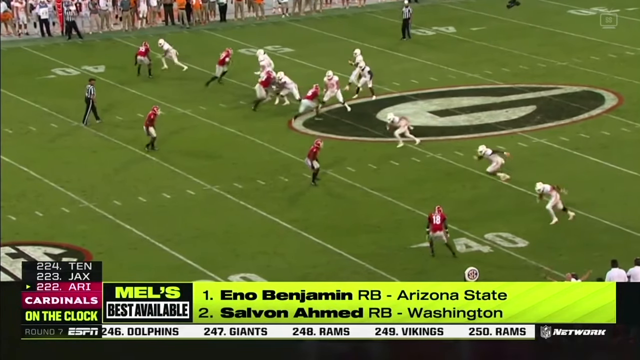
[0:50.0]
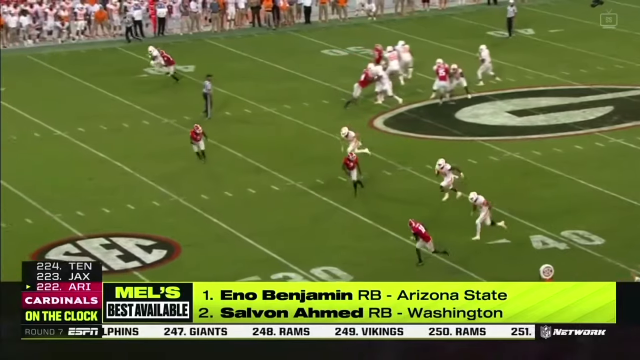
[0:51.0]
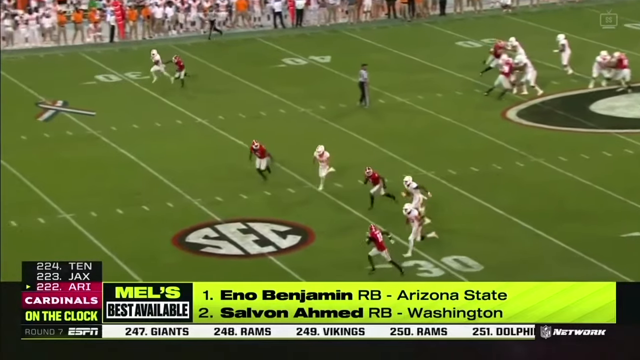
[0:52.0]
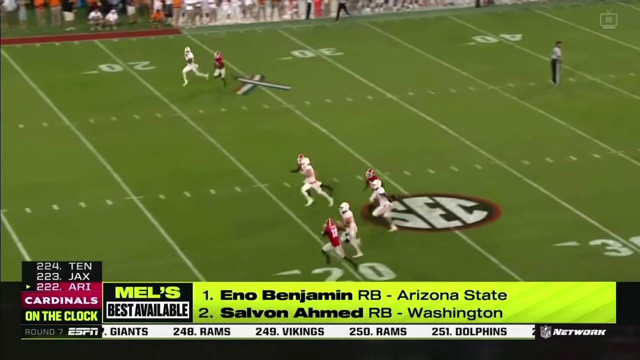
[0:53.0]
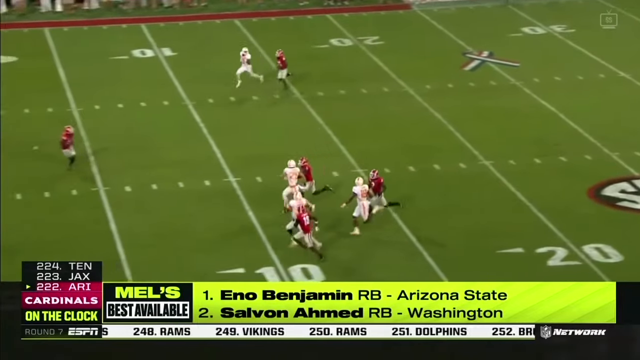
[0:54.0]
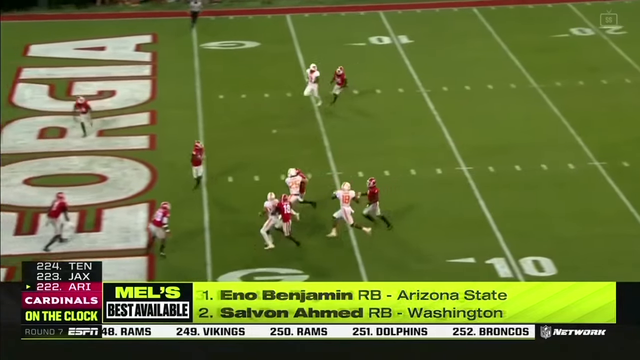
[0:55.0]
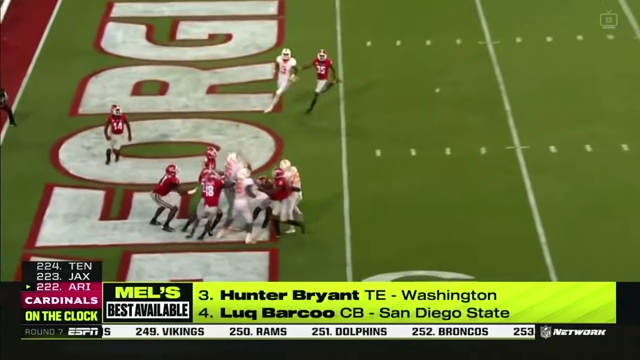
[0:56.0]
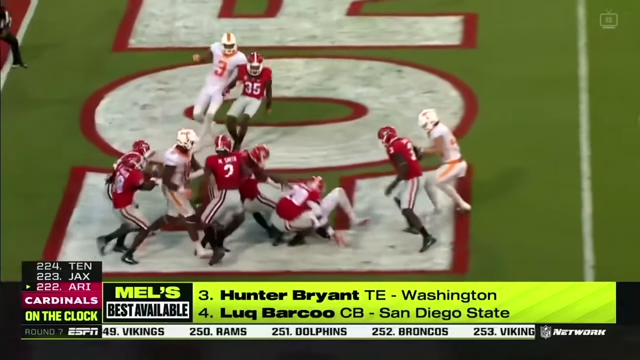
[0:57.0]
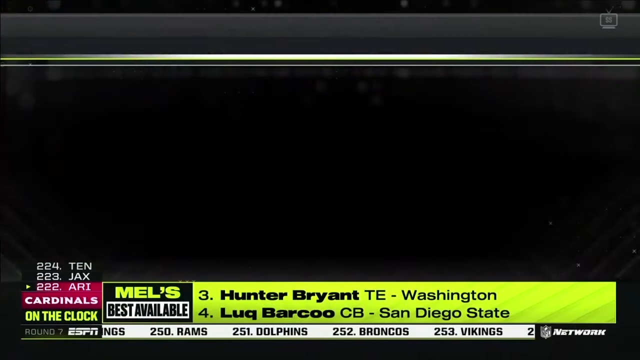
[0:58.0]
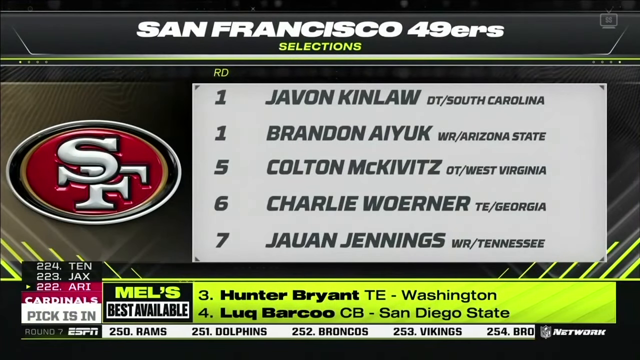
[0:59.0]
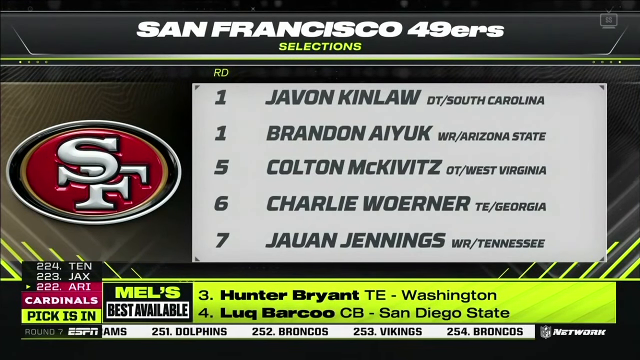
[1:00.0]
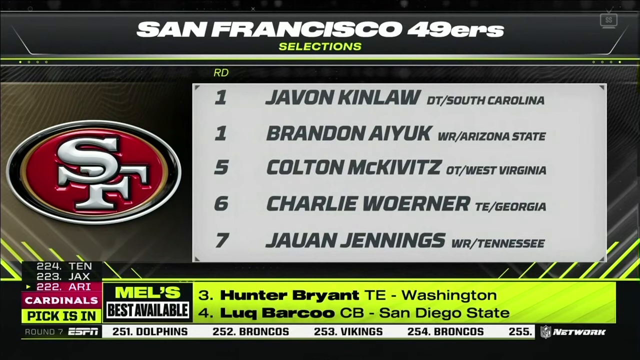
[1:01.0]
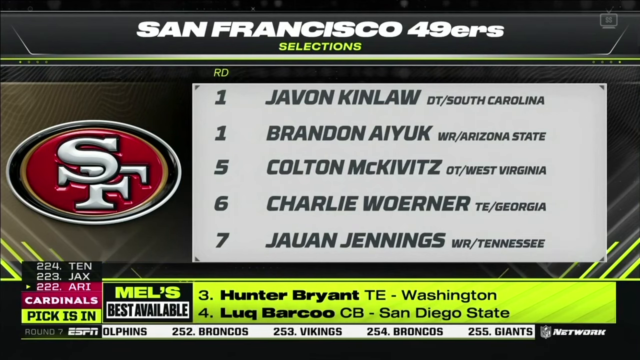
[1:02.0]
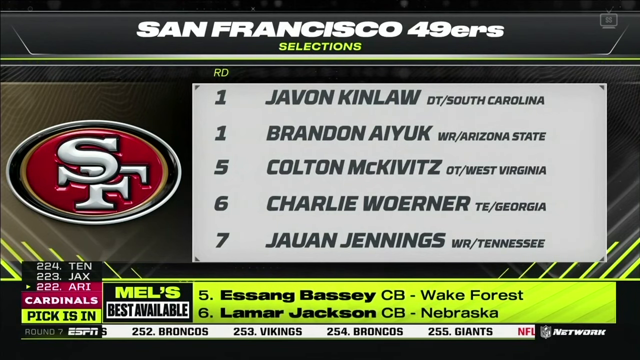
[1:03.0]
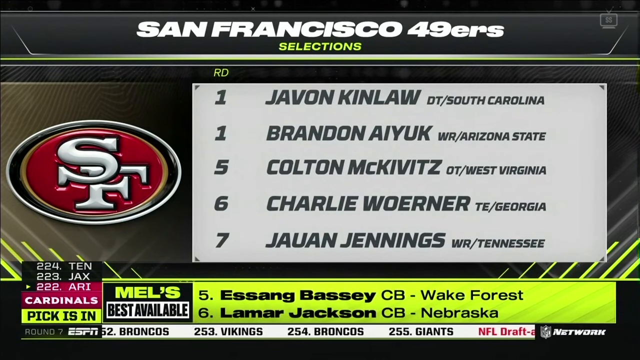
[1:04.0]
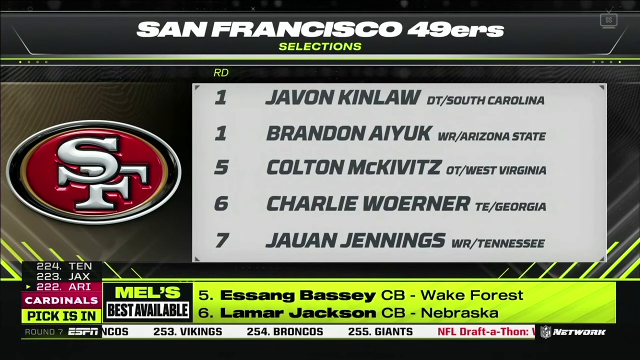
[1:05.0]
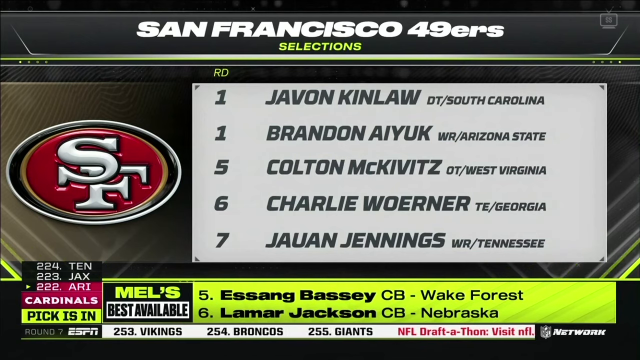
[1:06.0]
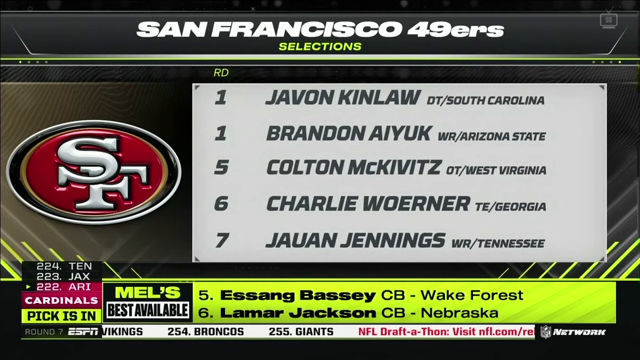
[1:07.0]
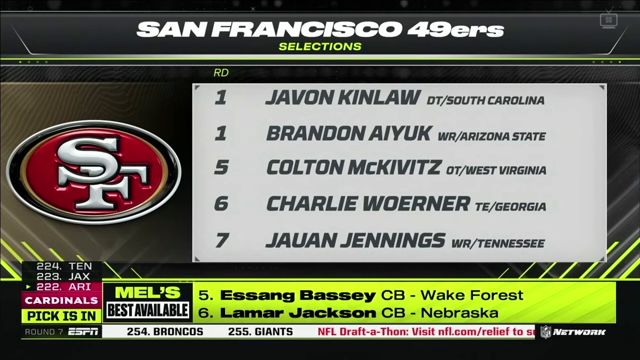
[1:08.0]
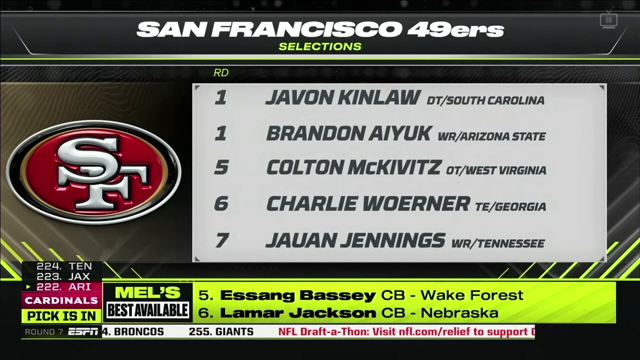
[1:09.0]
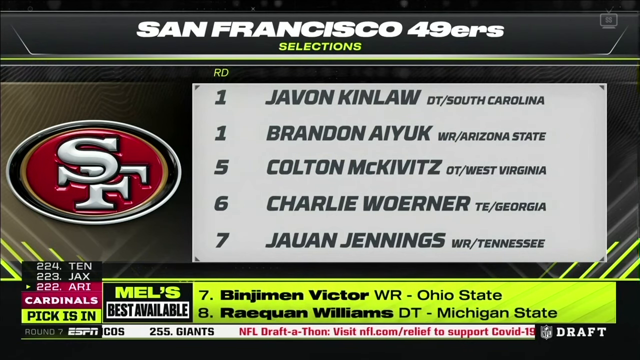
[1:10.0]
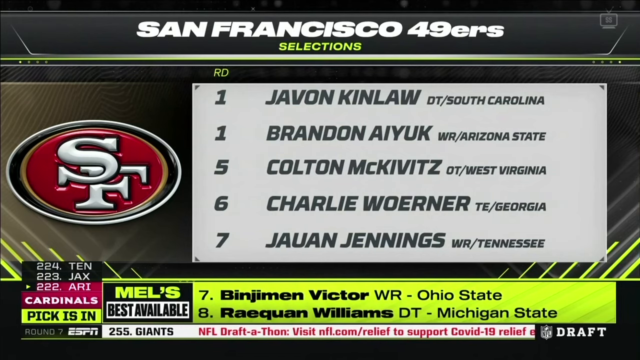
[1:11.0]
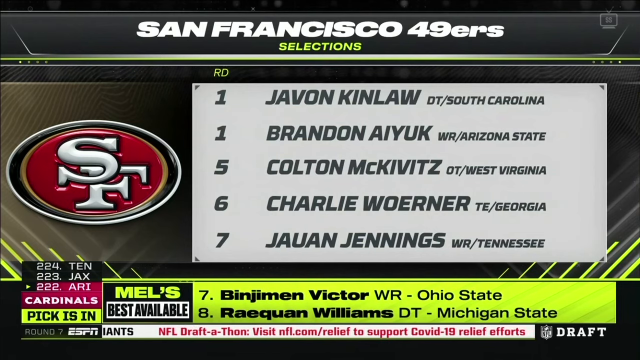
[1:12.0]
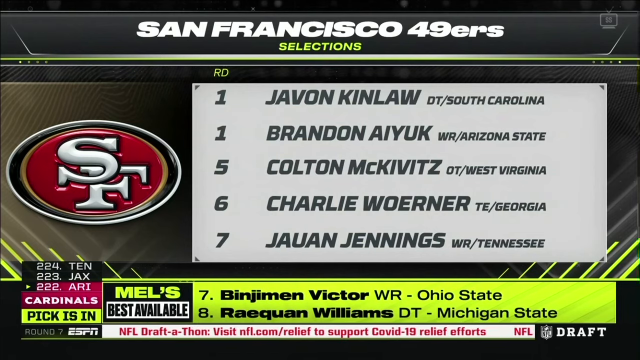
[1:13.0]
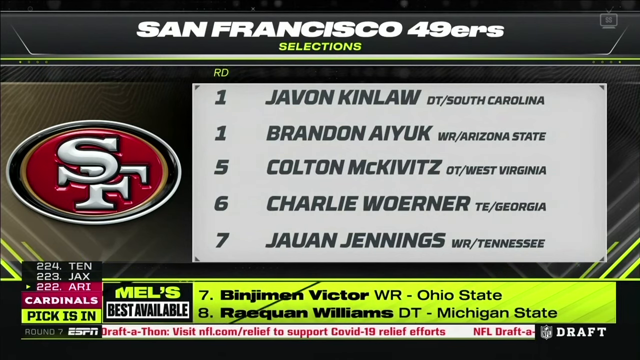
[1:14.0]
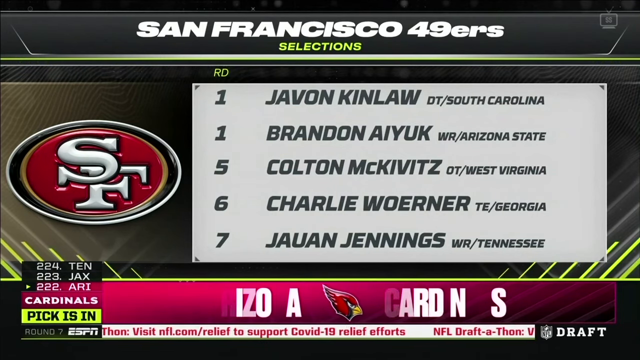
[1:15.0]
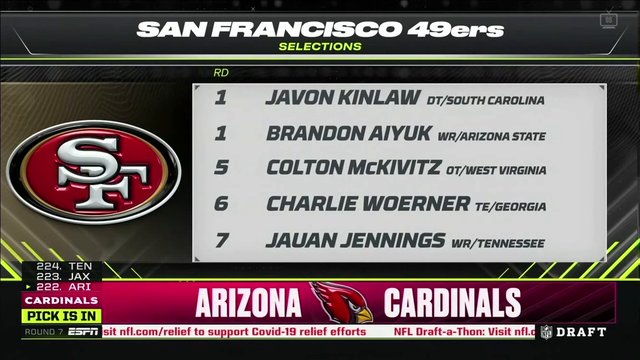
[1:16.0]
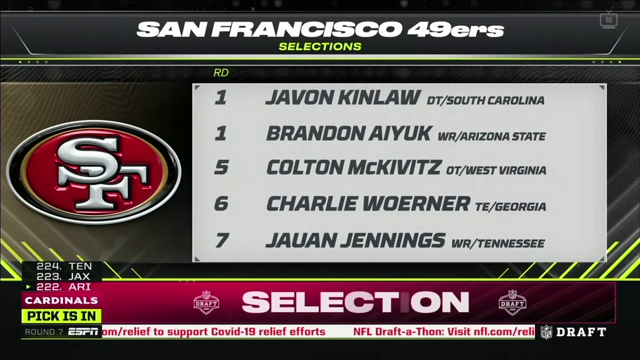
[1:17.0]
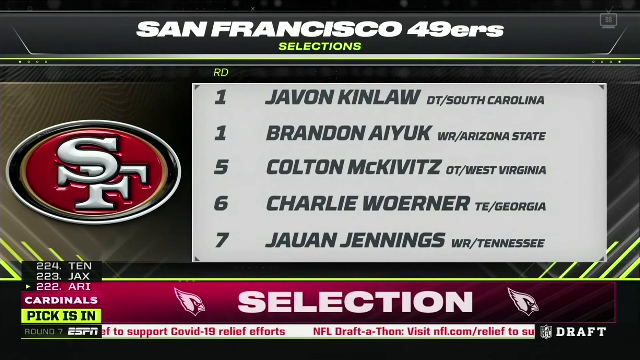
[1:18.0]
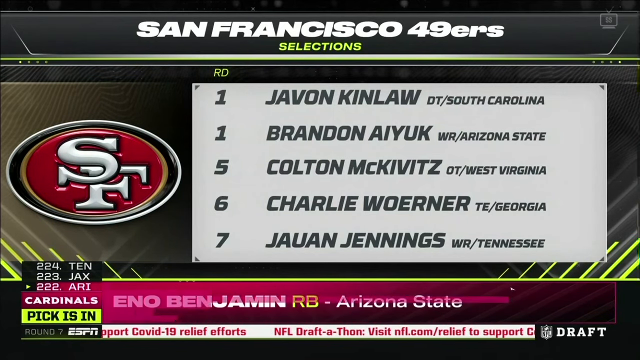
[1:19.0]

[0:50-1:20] A football game in the SEC is shown, a Georgia game, with a large number of players running into the end zone. A graphic pops up with selections from the San Francisco 49ers, with a capital S and a capital F on a red circle on the left. It lists for number one "Javon Clenshaw, OT, South Carolina"; another number one, "Brandon Ayuk, wide receiver, Arizona State"; for five, "Colton McKibbitz, OT, West Virginia"; number six, "Charlie Warner, TE, Georgia"; and number seven, "Javon Jennings, WR," wide receiver, Tennessee. At the bottom, "Mel's best available" lists the players still available that Mel considers the best, including Benjamin Victor from Ohio State. A notice then pops up that a selection is in from the Arizona Cardinals, as the NFL draft continues.